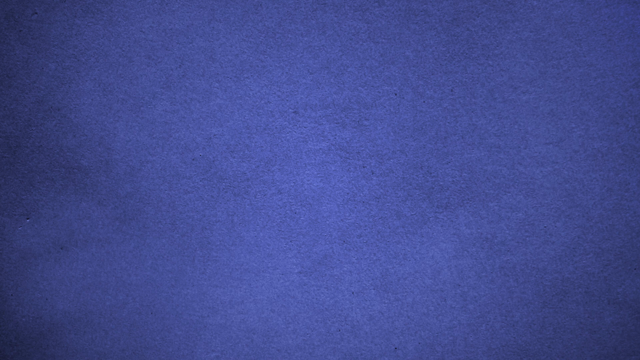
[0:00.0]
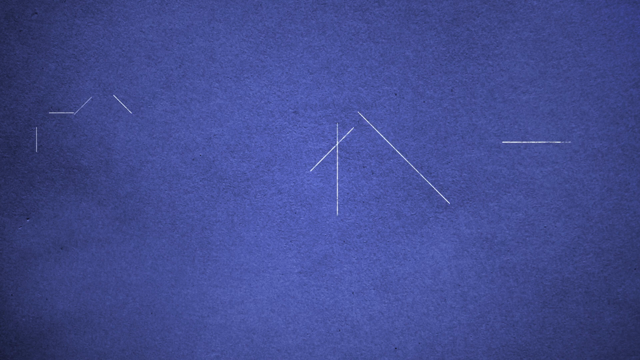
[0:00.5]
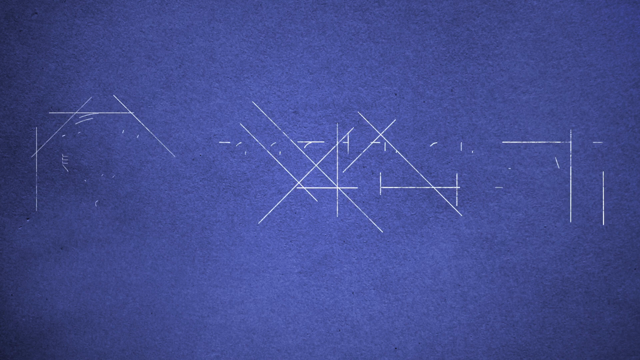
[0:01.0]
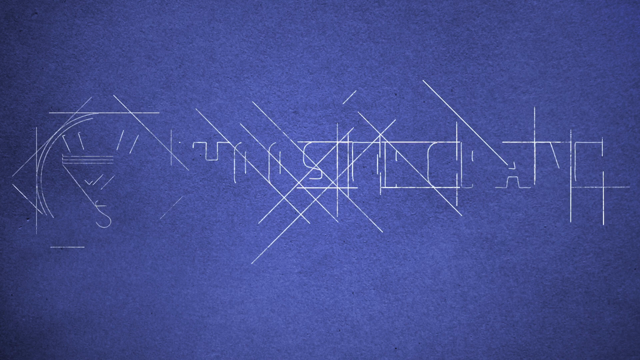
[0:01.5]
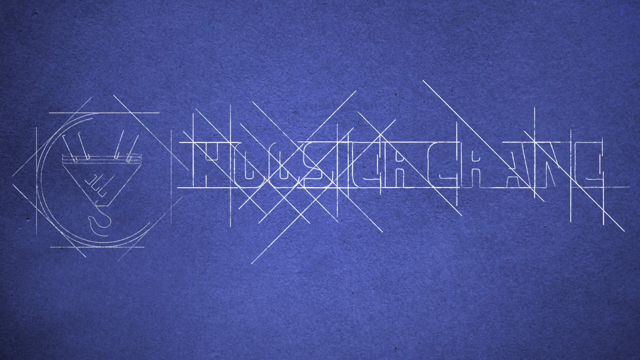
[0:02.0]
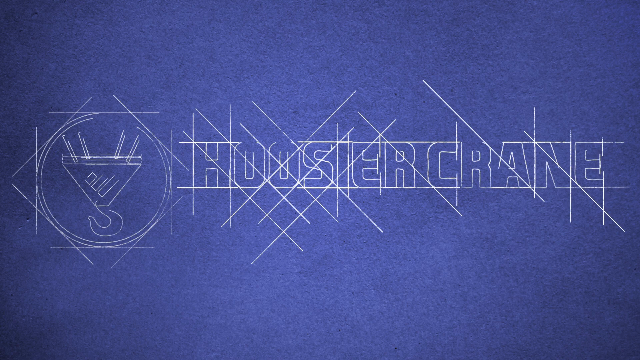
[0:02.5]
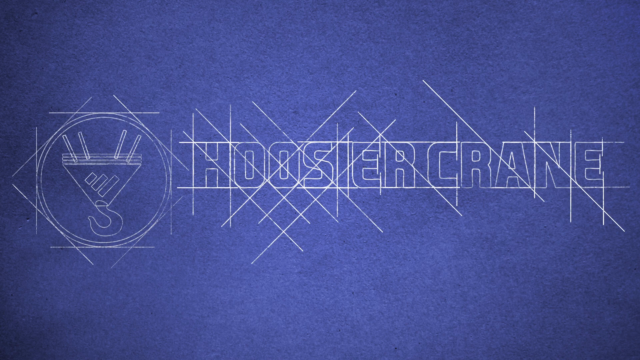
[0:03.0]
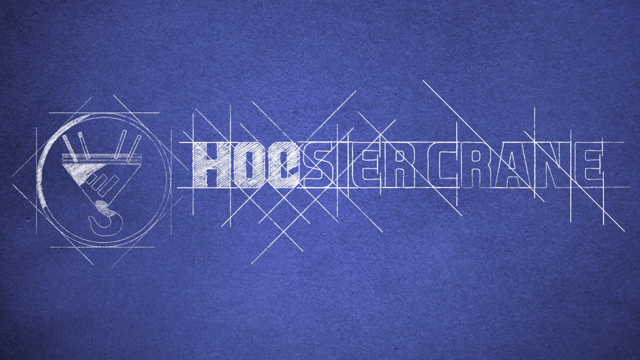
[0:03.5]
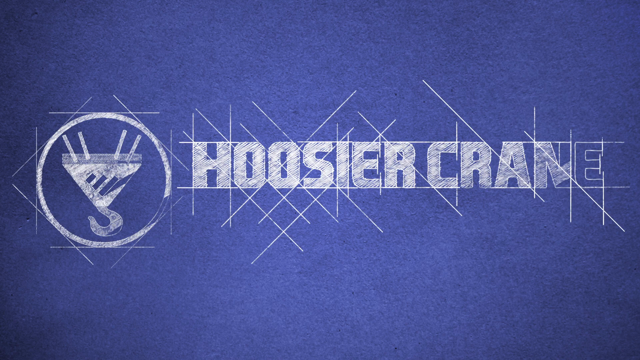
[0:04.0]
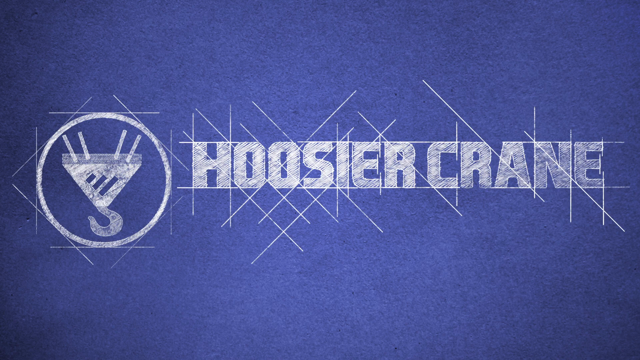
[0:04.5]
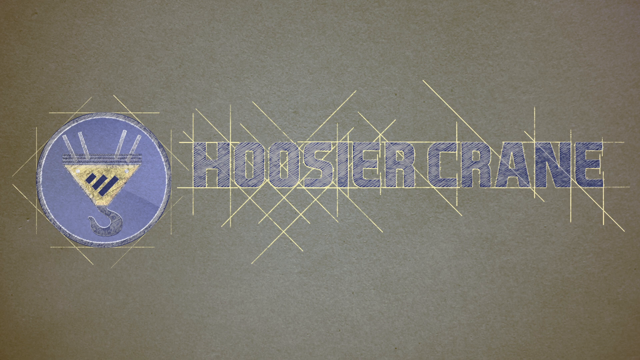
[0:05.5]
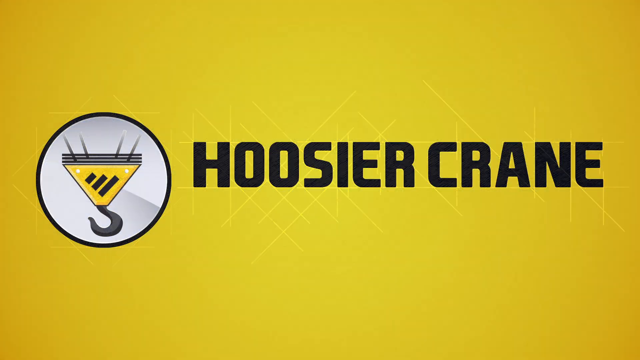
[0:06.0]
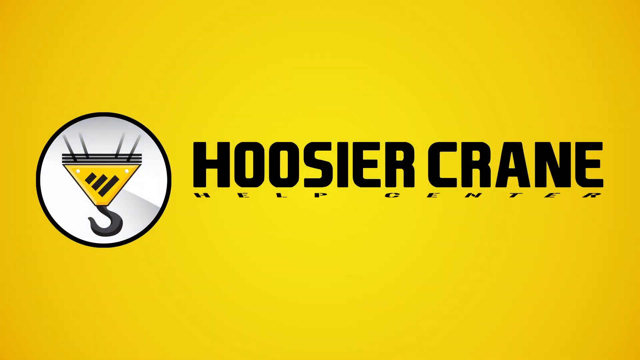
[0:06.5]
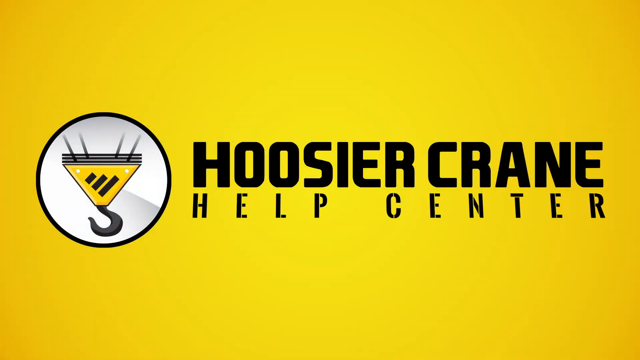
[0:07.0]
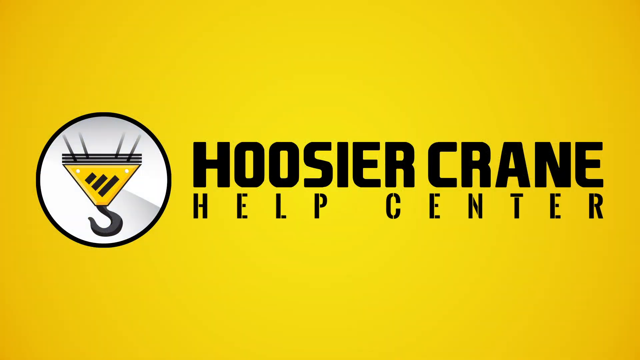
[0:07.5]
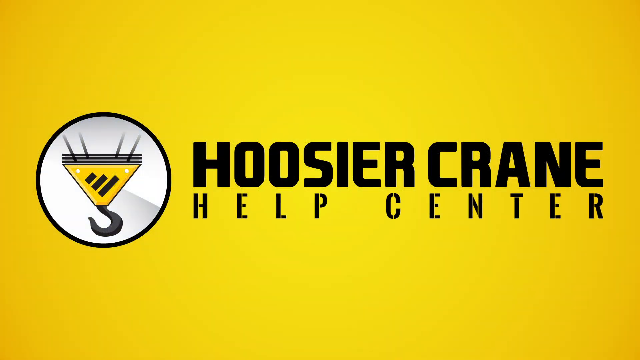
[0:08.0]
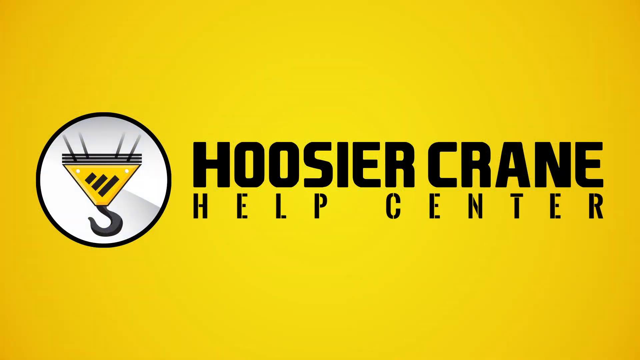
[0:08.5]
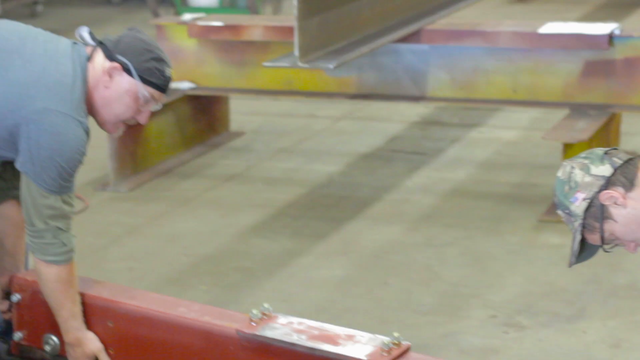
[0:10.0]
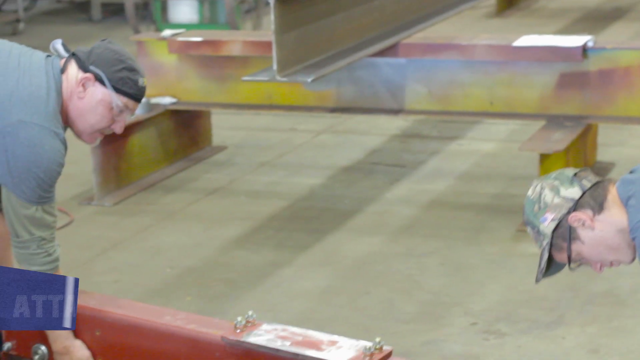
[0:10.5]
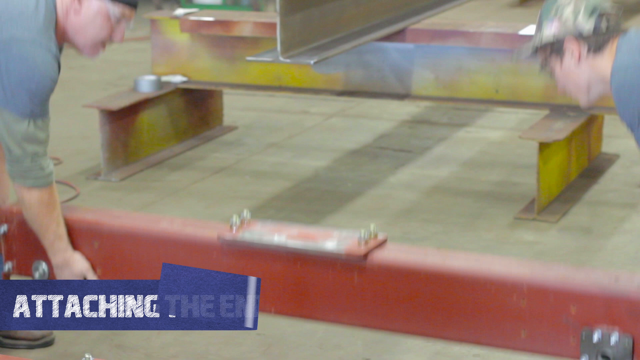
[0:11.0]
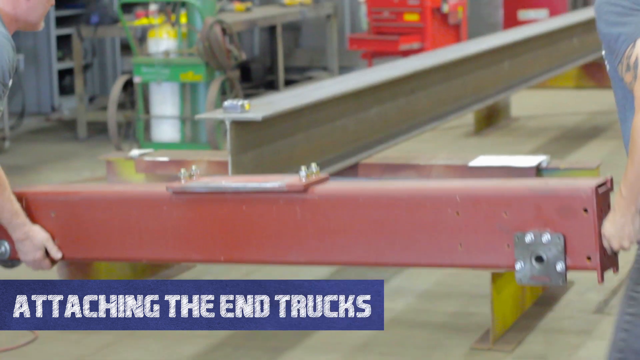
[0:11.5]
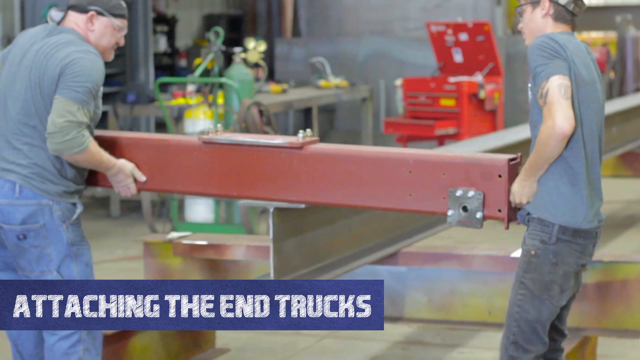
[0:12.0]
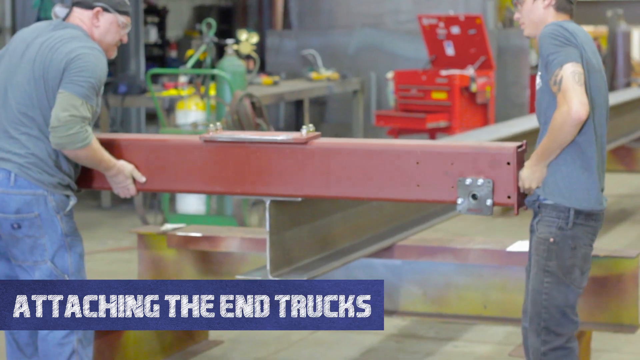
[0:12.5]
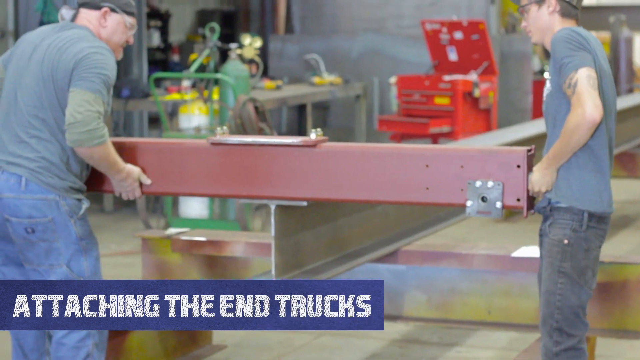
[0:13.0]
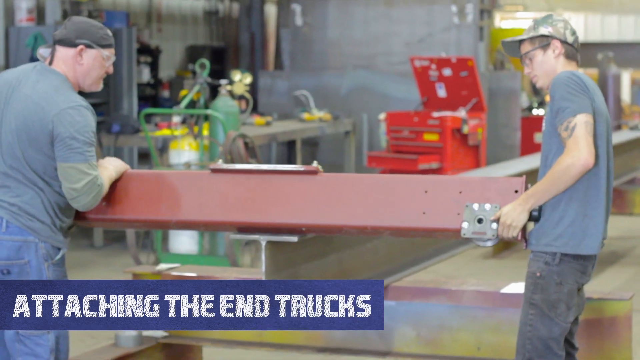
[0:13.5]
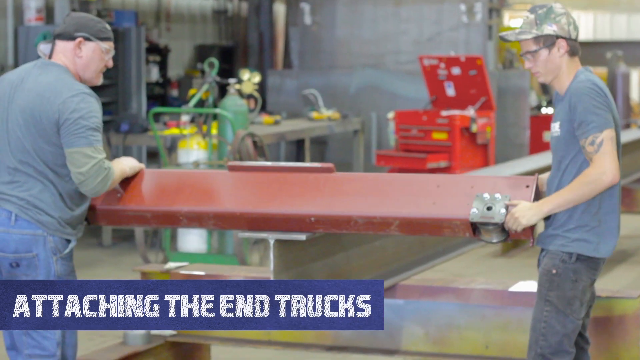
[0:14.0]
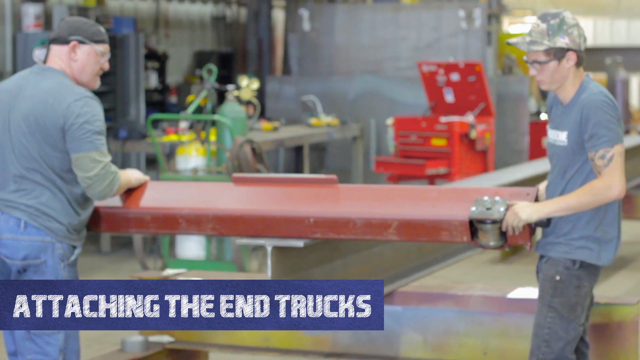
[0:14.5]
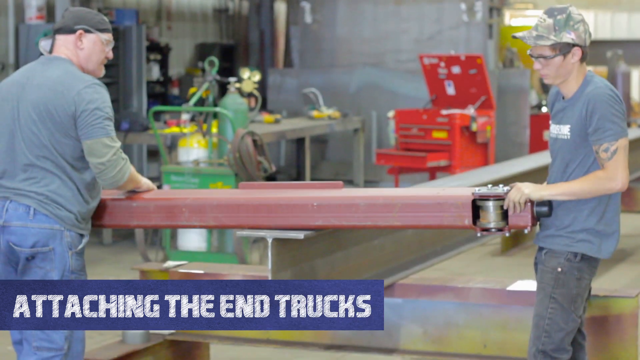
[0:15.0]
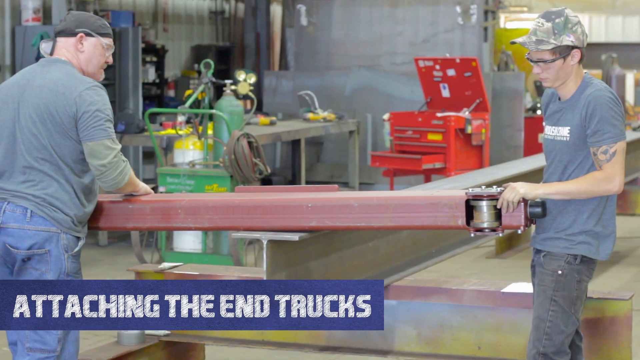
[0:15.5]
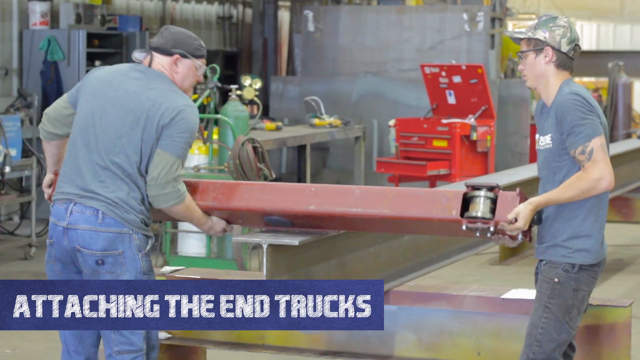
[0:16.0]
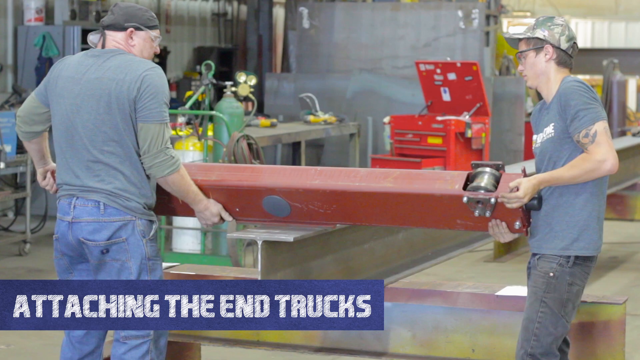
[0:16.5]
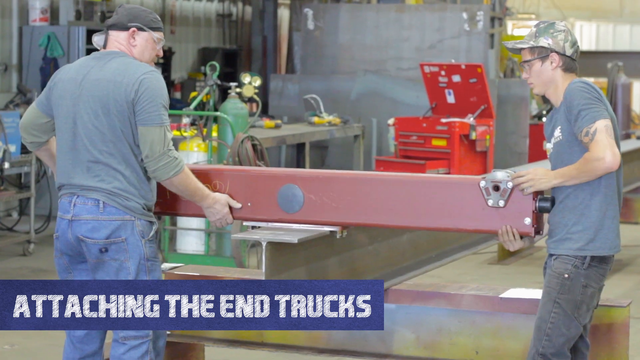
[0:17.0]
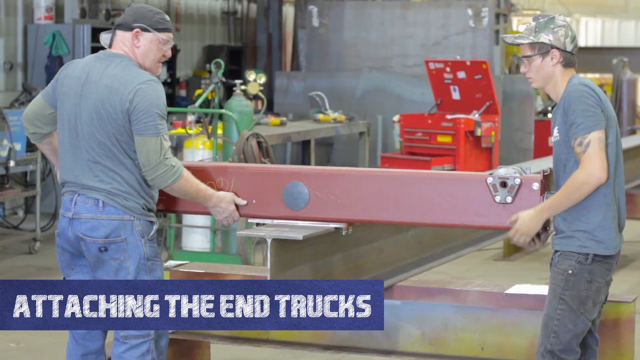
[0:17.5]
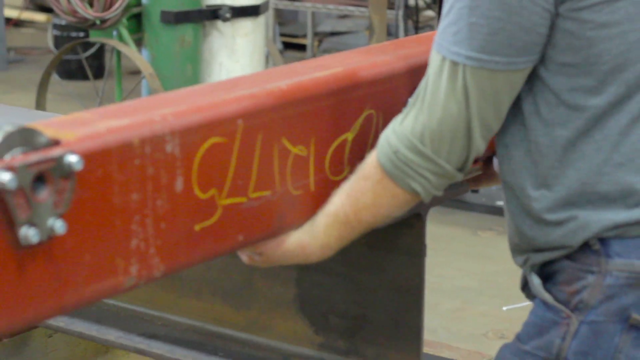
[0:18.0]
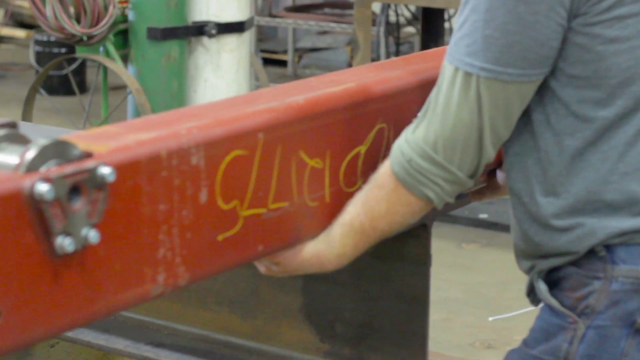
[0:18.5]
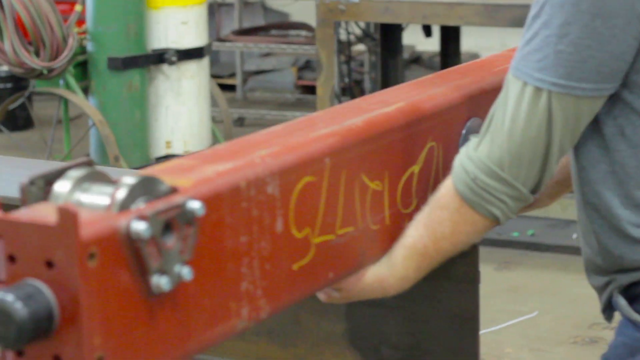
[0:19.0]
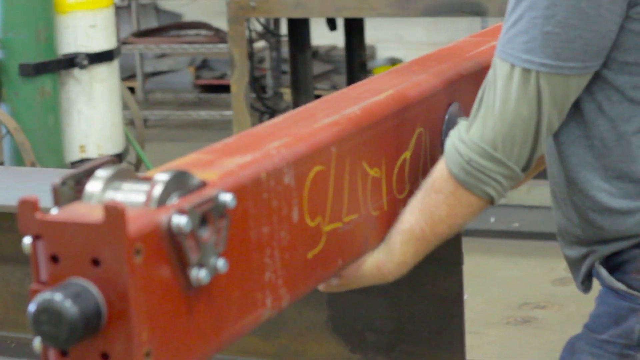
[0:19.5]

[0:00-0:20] The DIY video opens with a presentation on a dark blue background that reads 'Hoosier Crane Help Center', with a logo of a crane on the left. The background then turns yellow. Two men lift a large red bar while text at the bottom left reads 'Attaching the end trucks'. They appear to be setting the large red bar on top of a grey platform. The man on the left is a bigger man wearing a bright blue t-shirt over a green long-sleeved shirt, blue jeans, and a black hat. The man on the right wears a bright blue t-shirt, darker gray jeans, glasses, and a camouflaged baseball cap. Both men appear to be in a room with a lot of tools and toolboxes. The camera zooms into the large red bar held by the bigger man, and the bar appears to have yellow writing on it.